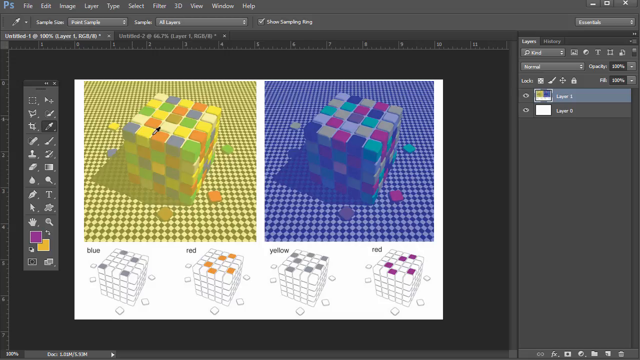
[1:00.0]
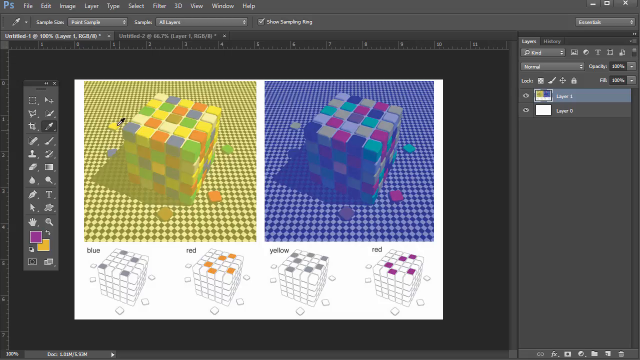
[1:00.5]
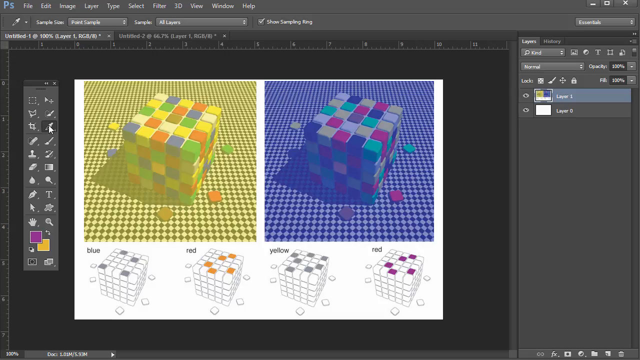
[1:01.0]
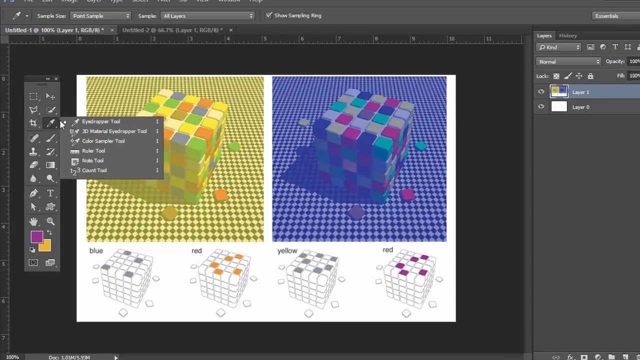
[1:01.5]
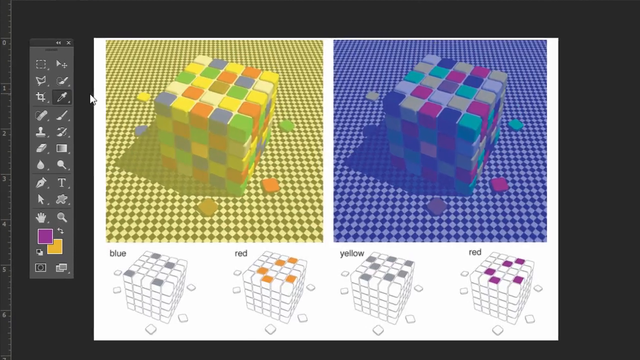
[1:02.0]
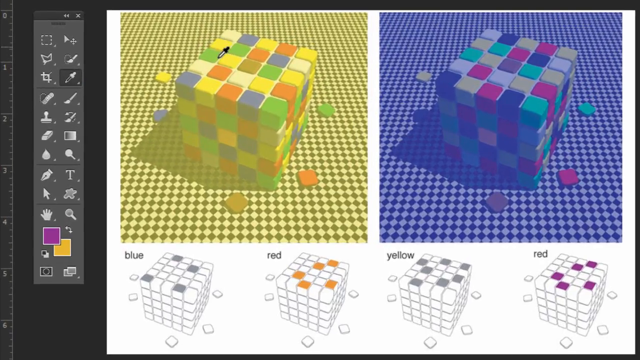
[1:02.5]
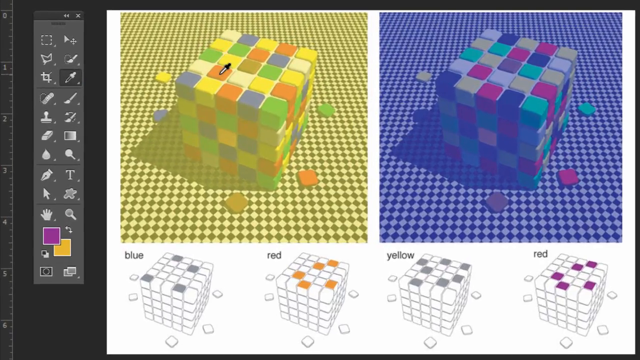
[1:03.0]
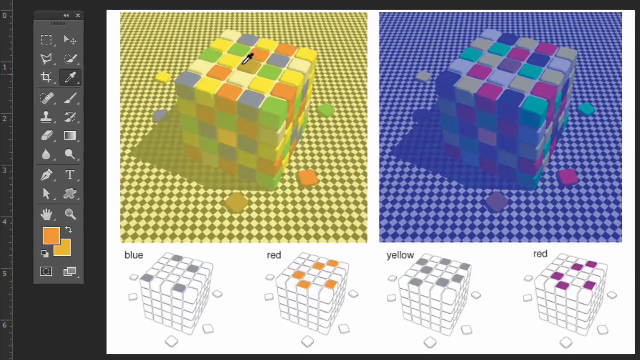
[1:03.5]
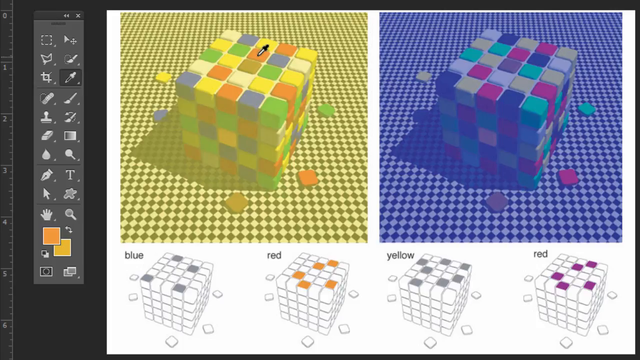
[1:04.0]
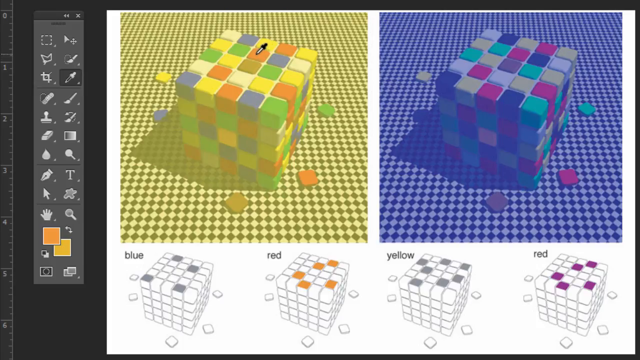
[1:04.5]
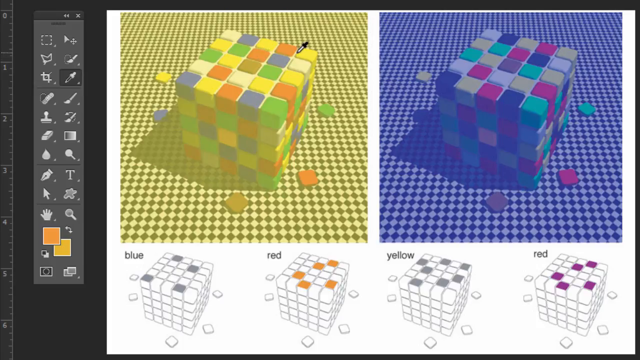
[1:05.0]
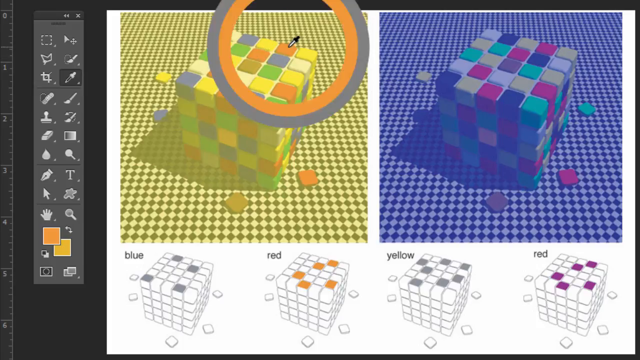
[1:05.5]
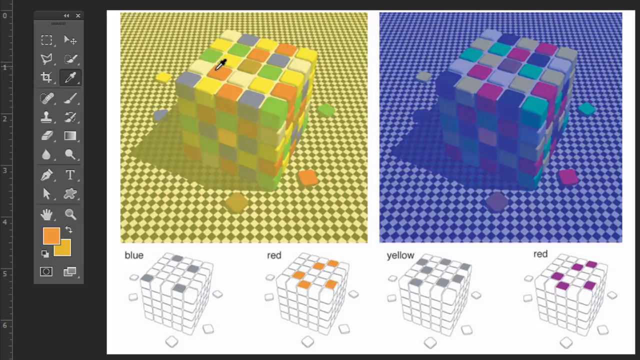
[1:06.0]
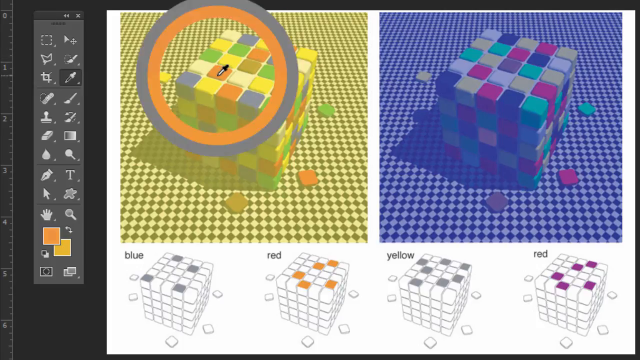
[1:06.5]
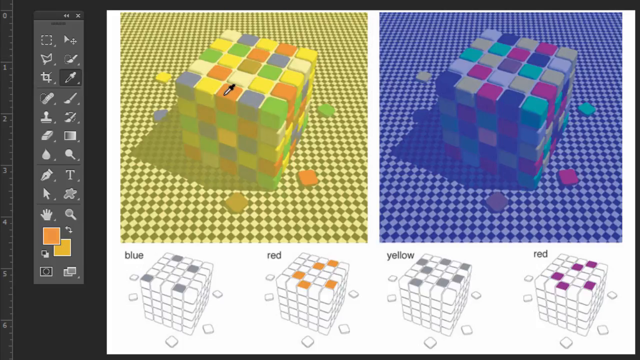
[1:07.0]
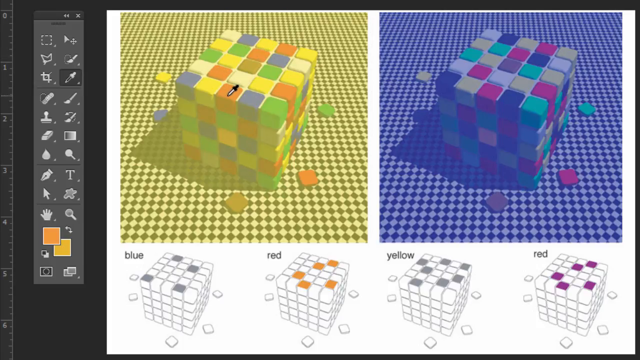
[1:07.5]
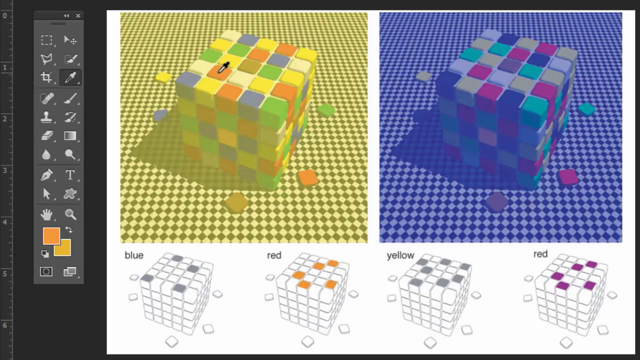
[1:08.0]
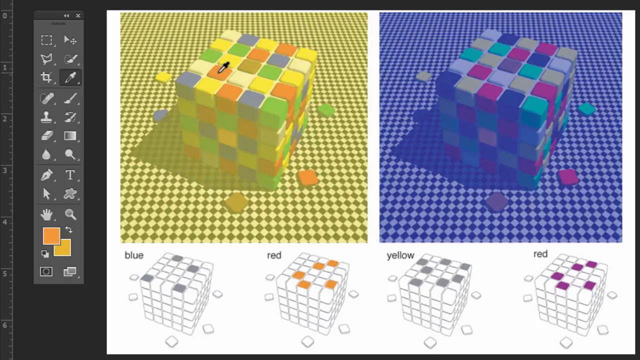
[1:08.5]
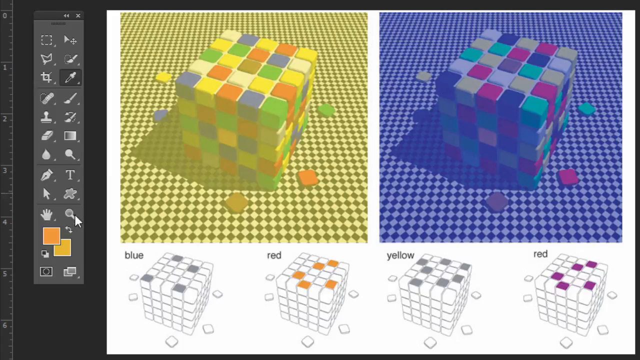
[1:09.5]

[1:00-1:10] A Photoshop window is open with the diagram of Rubik's Cube-like figures filled with all kinds of colors, and a diagram at the bottom with the different colors labeled. The cube on the left has a yellow overlay and the one on the right has a blue overlay. The user appears to be sampling colors, showing how each compares within the red area, and clicks on four different spots labeled red.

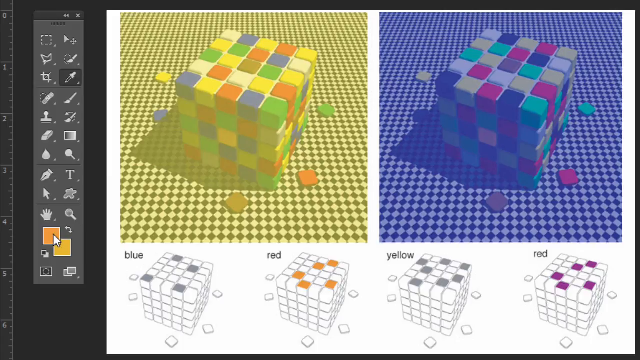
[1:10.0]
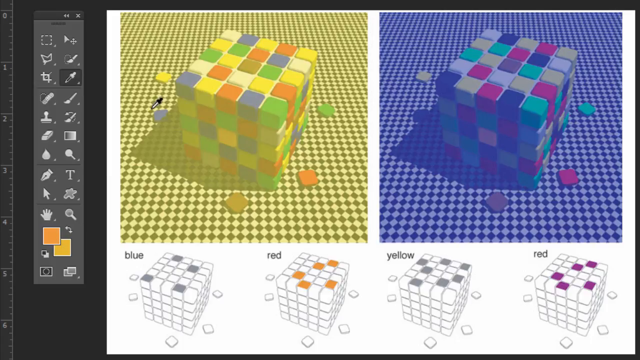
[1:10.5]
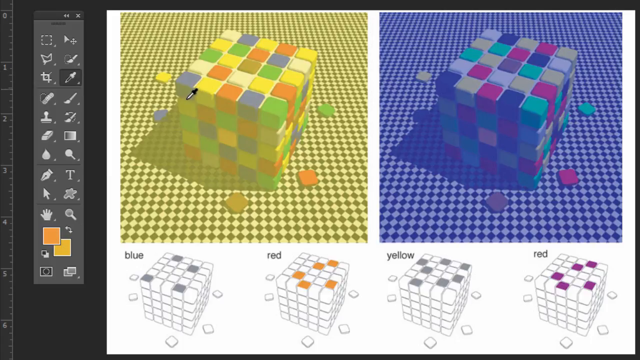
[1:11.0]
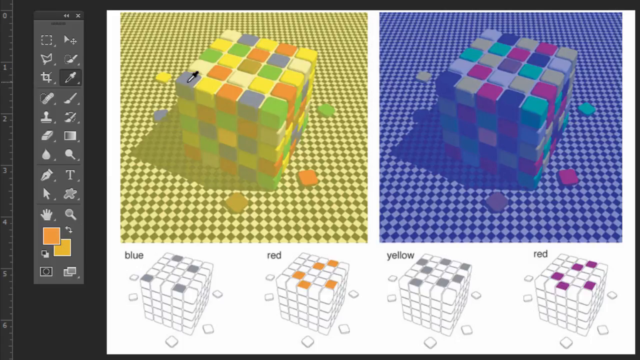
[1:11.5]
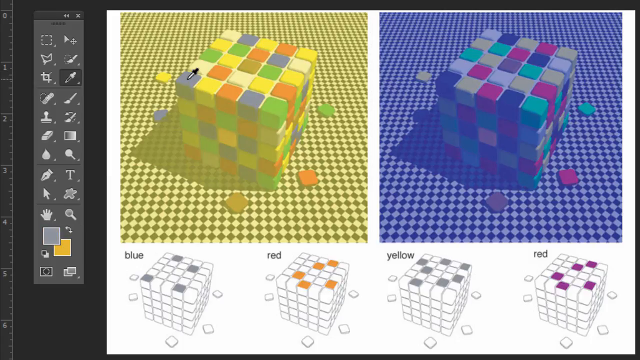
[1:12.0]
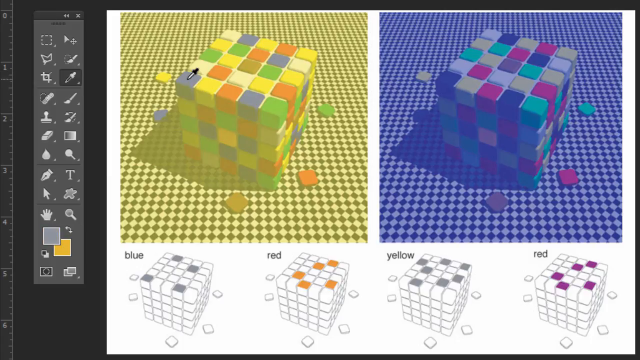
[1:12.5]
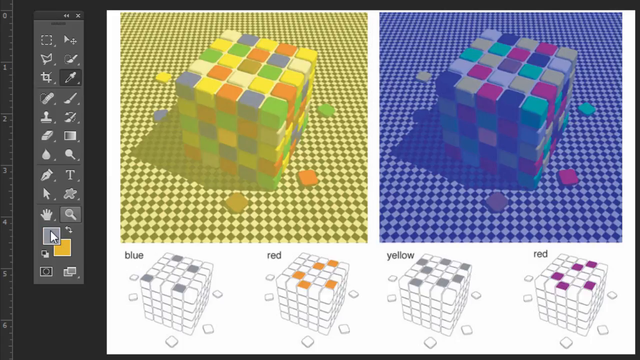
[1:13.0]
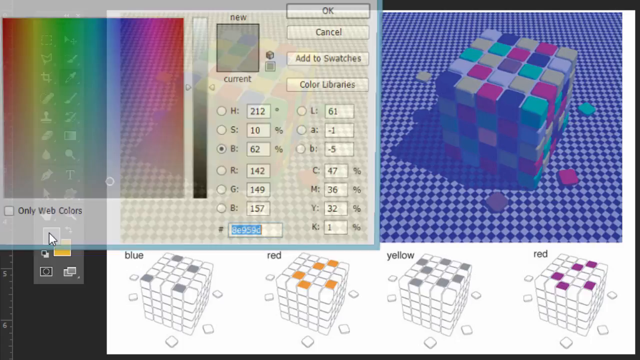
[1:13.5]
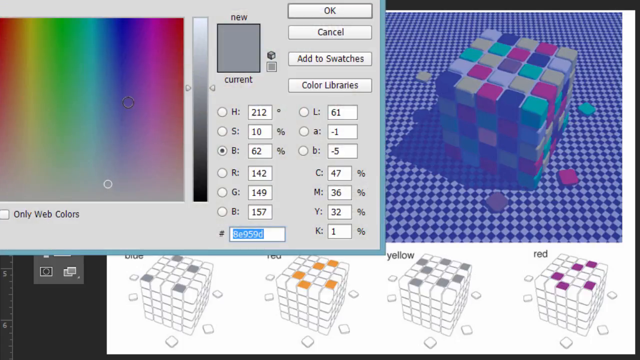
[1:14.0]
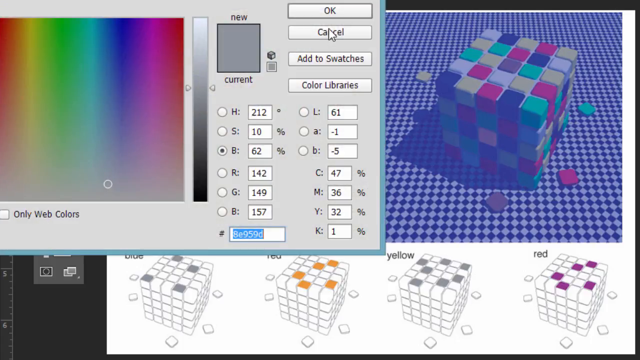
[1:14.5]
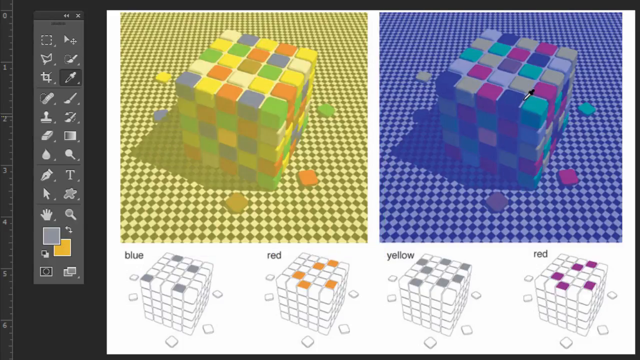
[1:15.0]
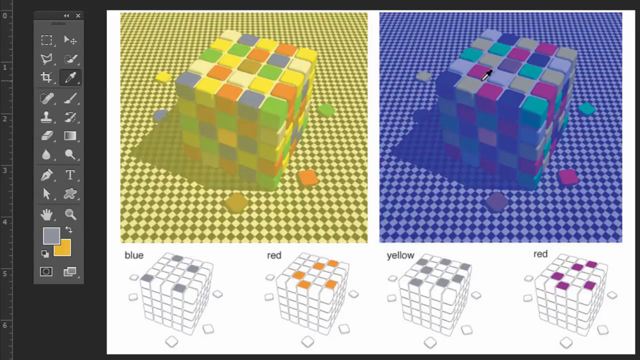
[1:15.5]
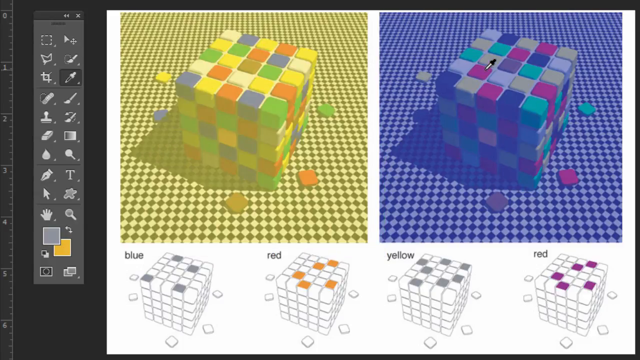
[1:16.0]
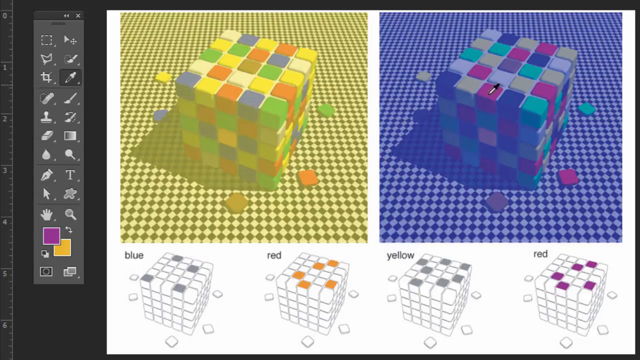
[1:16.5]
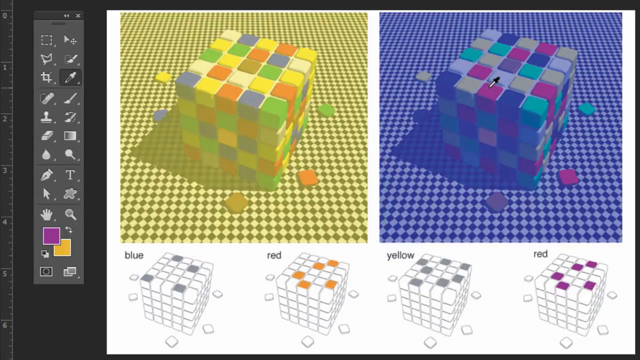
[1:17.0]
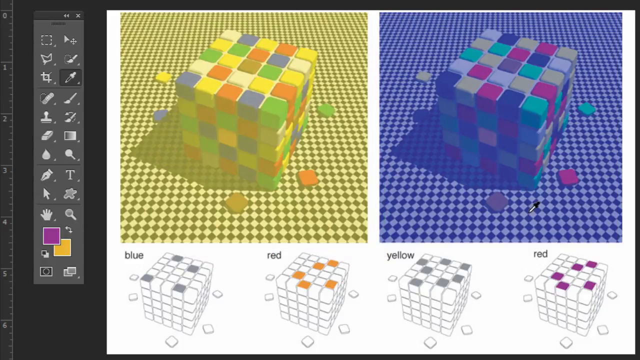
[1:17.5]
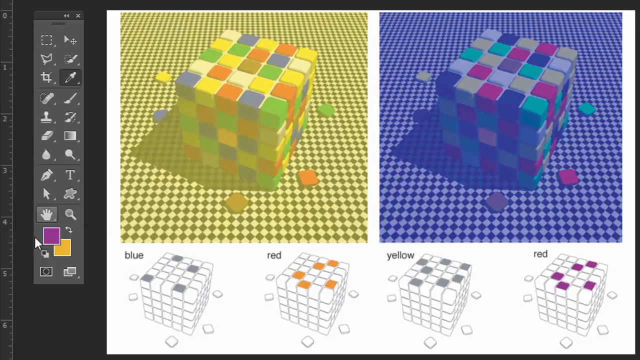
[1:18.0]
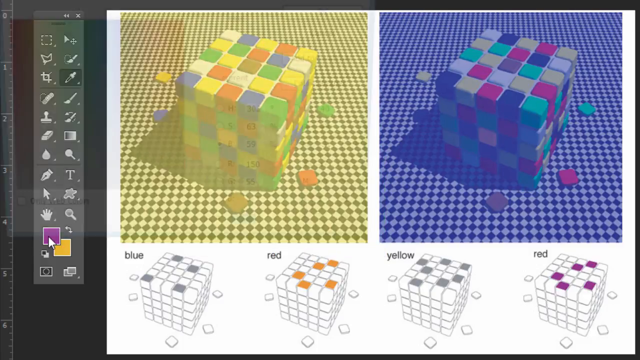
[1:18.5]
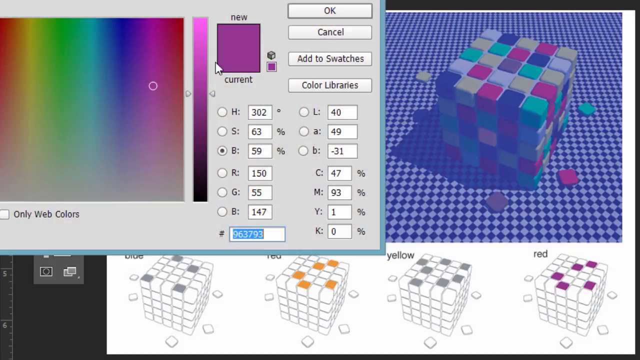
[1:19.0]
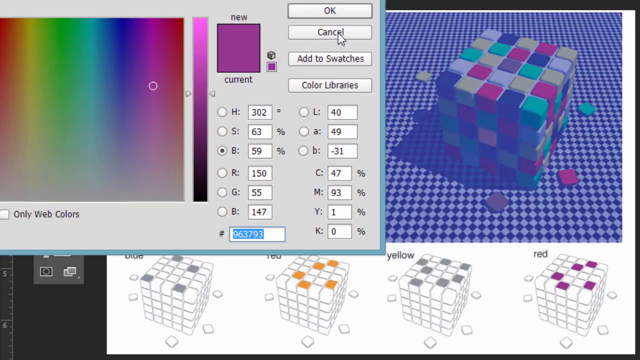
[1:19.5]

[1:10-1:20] The view remains in Photoshop, with the tool area open on the left and an empty area underneath and around it. A Rubik's Cube-like figure covered in many colors is shown, with a diagram of some of the cube's colors underneath. The left cube has a yellow overlay skewing some of its colors, while the right one has a blue overlay changing its colors. The user clicks on the yellow side, then moves to the other side to show that the red on the blue side is very different from the red squares on the yellow side, being almost purple and closer to blue.